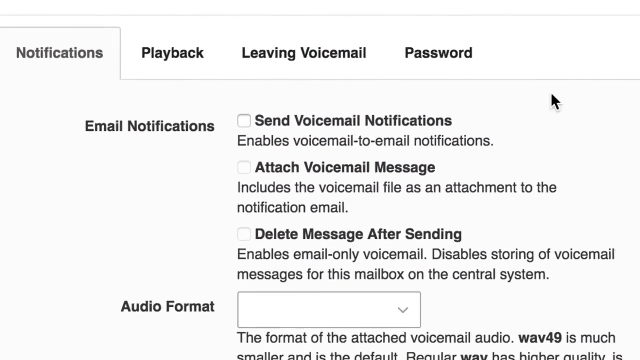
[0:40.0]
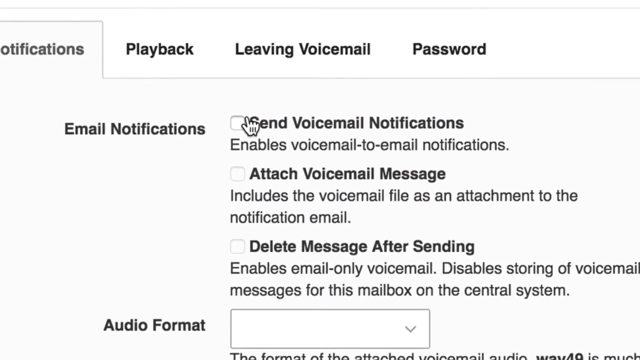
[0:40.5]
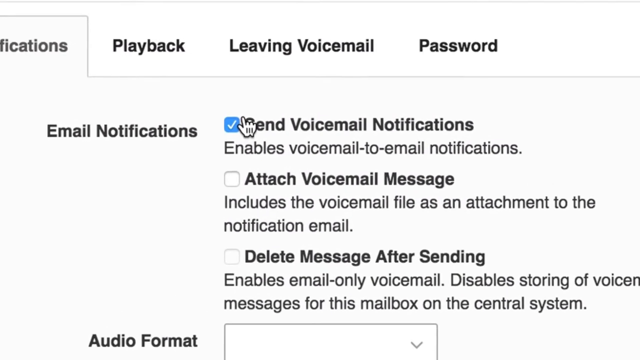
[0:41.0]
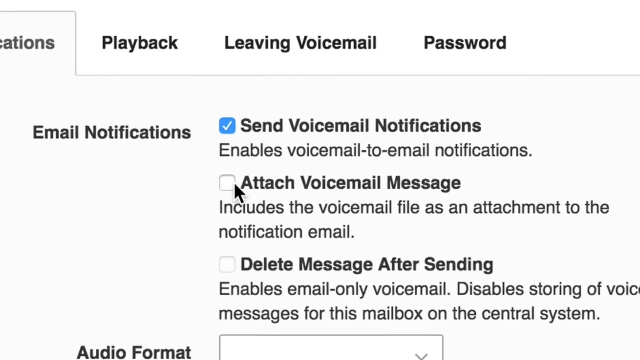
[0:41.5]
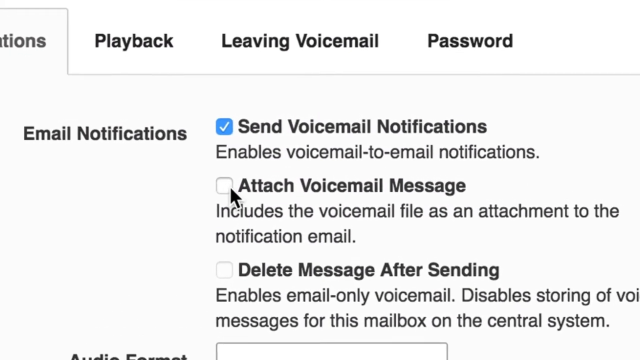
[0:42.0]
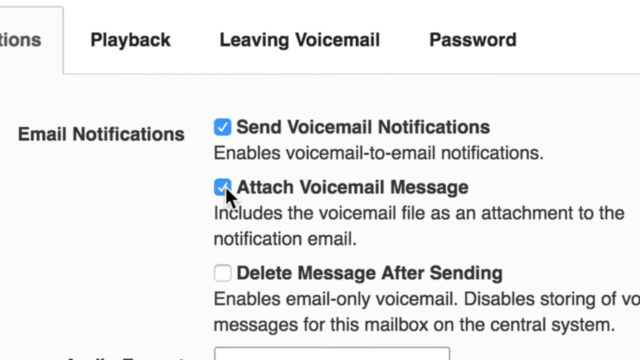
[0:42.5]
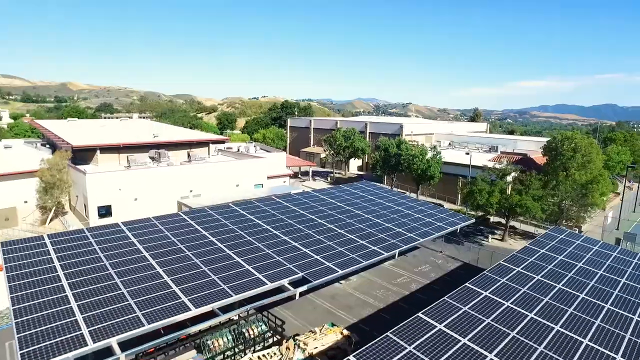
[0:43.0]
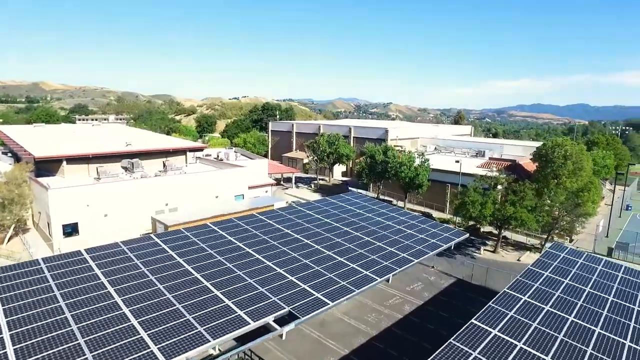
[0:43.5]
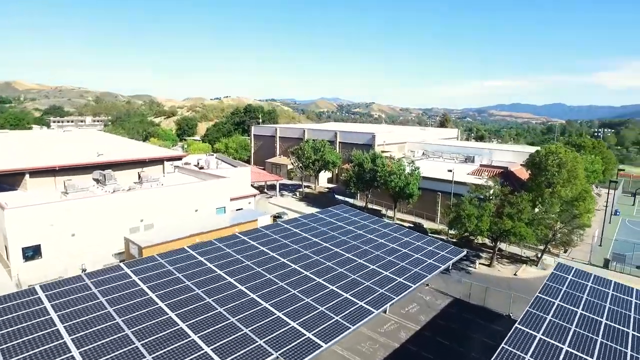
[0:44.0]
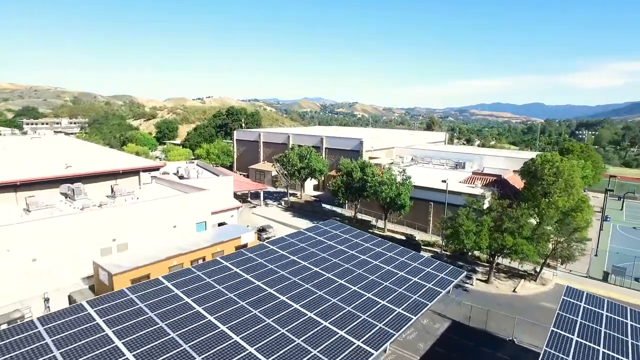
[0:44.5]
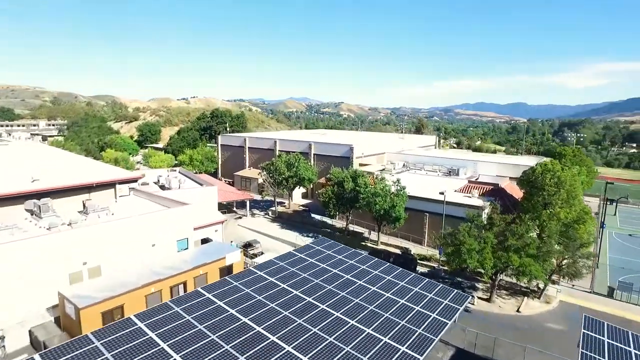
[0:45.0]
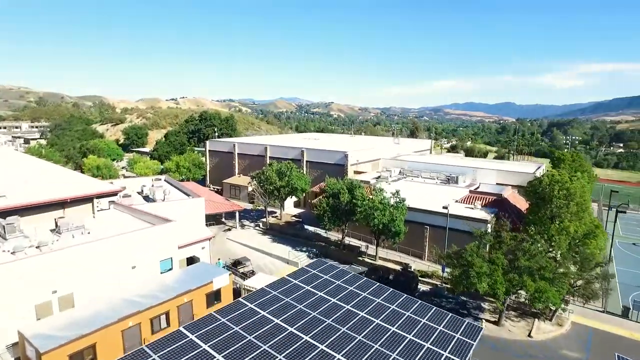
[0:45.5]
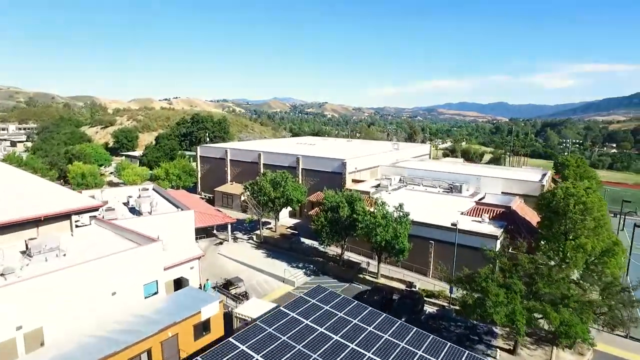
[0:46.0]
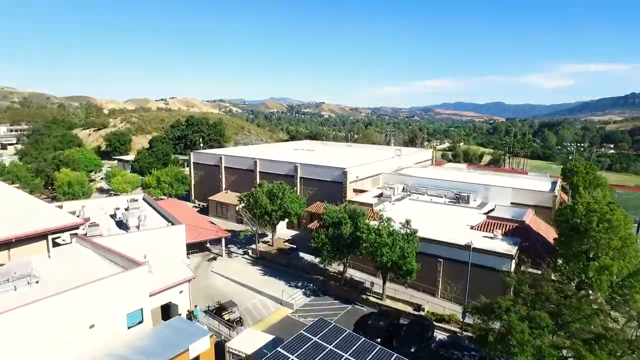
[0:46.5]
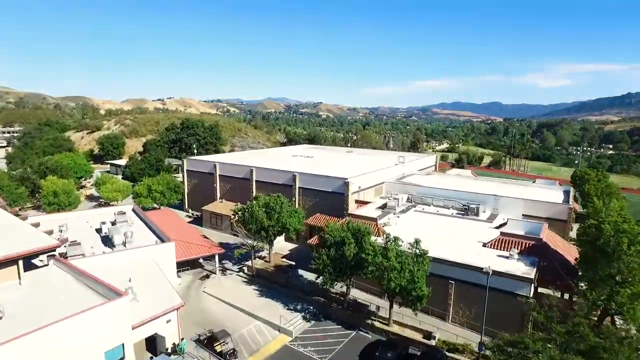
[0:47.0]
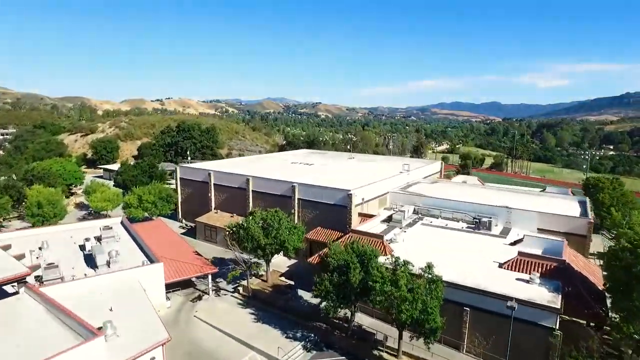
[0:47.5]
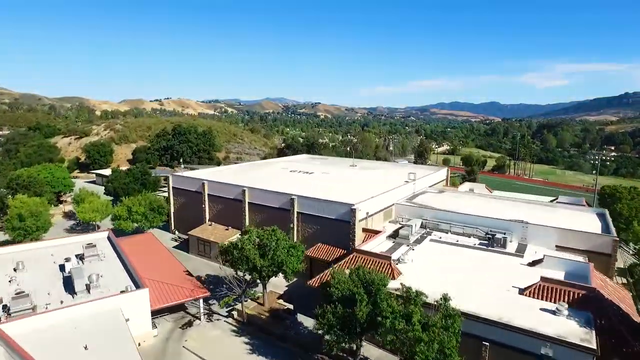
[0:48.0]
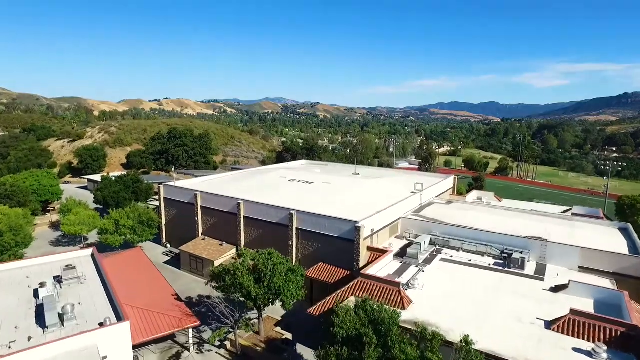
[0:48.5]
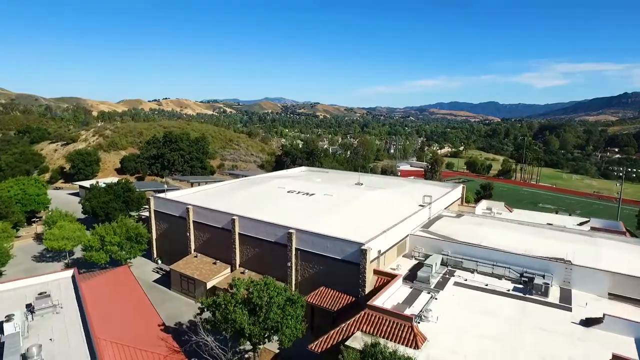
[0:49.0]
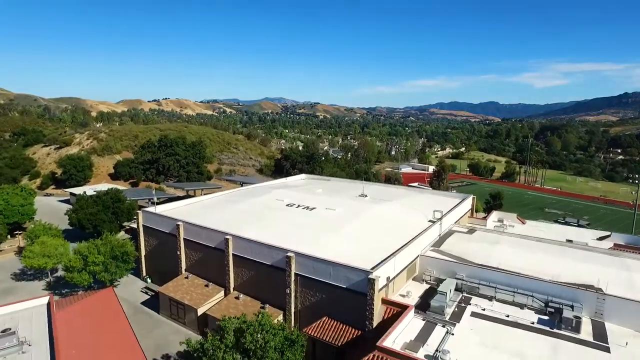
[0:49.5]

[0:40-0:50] What looks like someone on a website tests the email notification settings. One of the tabs at the top says "Notifications", and the mouse ticks the box that says "Send Voicemail Notifications". Other tabs include "Voicemail" and "Password", and the box that says "Attach voicemail message" is ticked, showing a white tick in a blue box. Outside, the view is almost like a drone over the top of a building with a flat roof covered in solar panels. Another building is to the left and another to the right, and what looks like a basketball court is to the right of that further building, partially visible on the right of the screen. In the distance there is blue sky, some low-hanging white cloud, and a number of dry hills all along the horizon, with trees around each building. The view comes over to the further building, and on the other side of it is what looks like a football field, a gridiron field with an athletics track around it.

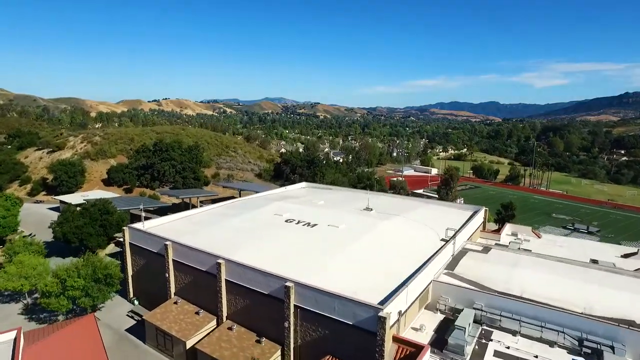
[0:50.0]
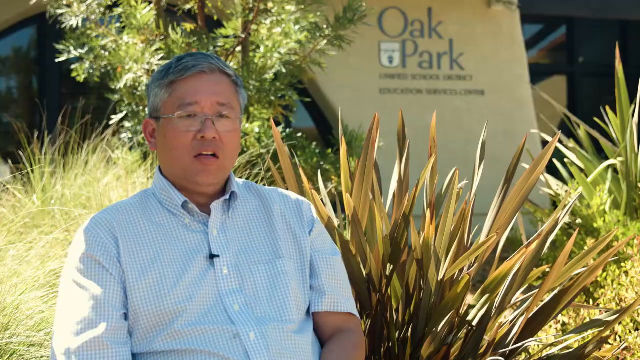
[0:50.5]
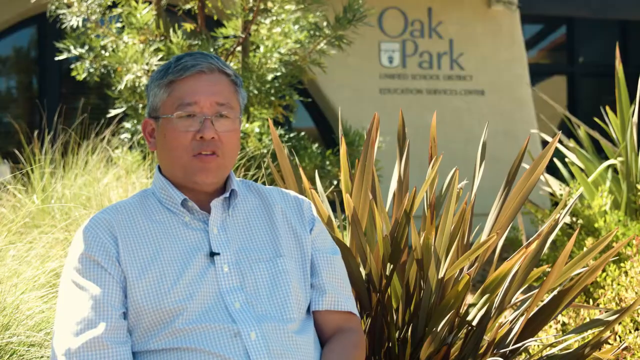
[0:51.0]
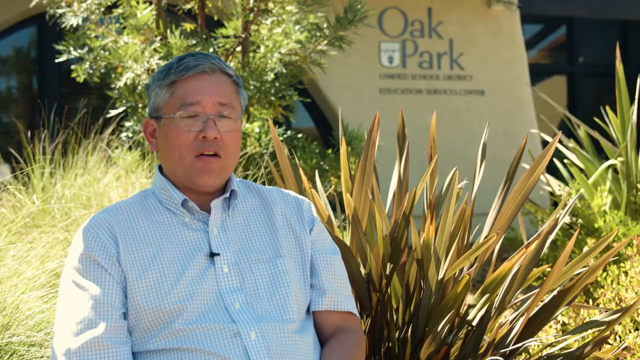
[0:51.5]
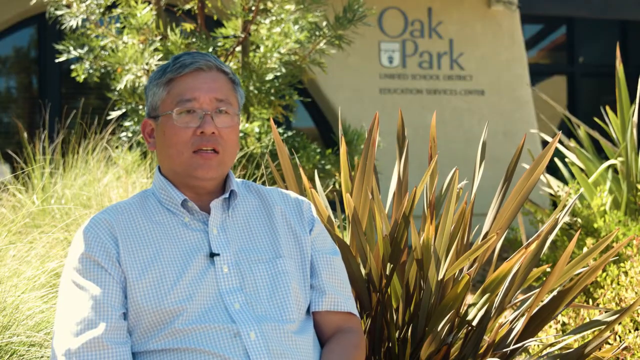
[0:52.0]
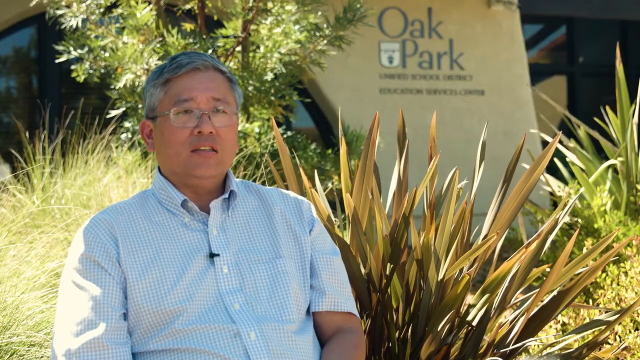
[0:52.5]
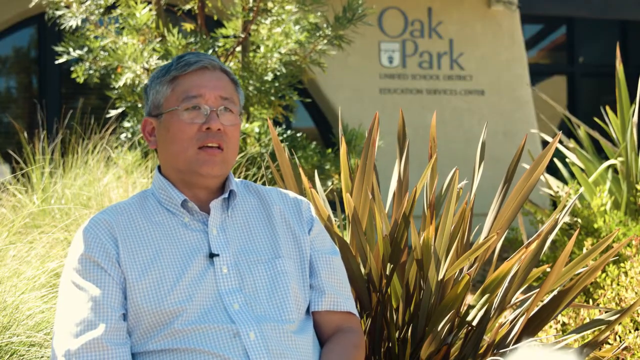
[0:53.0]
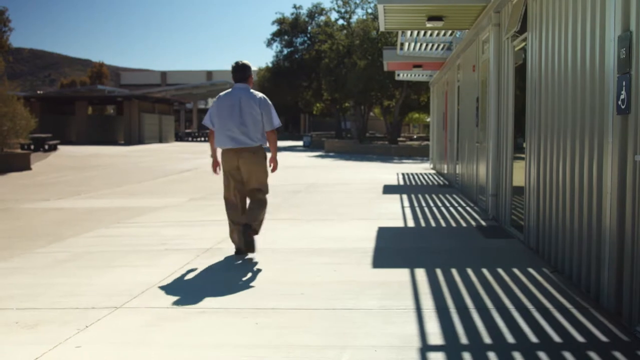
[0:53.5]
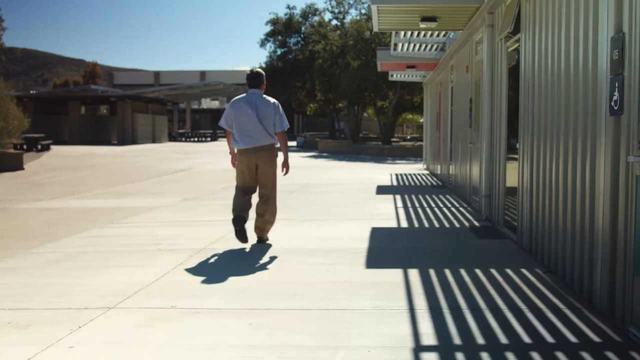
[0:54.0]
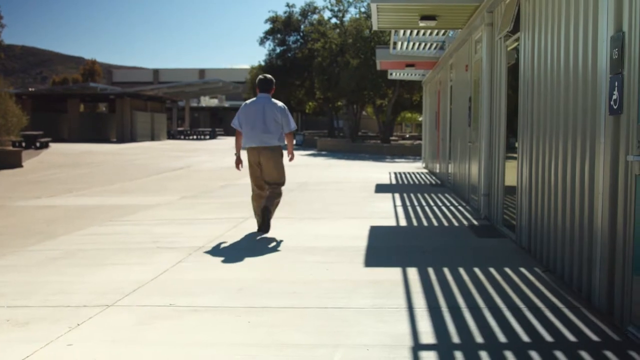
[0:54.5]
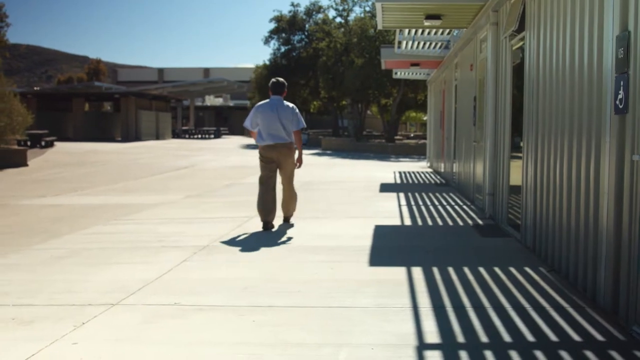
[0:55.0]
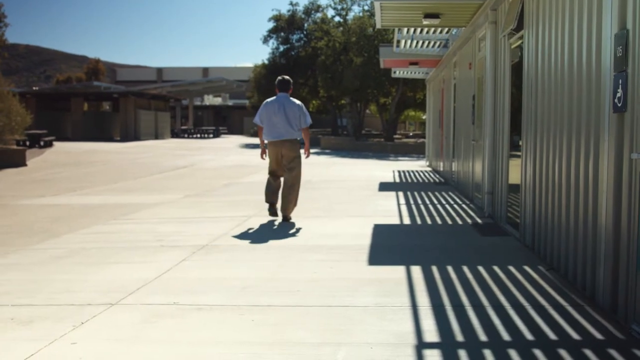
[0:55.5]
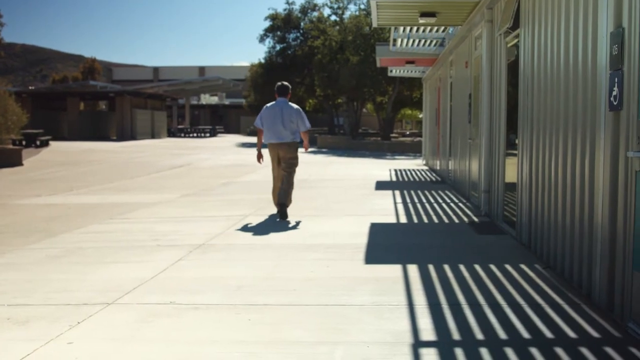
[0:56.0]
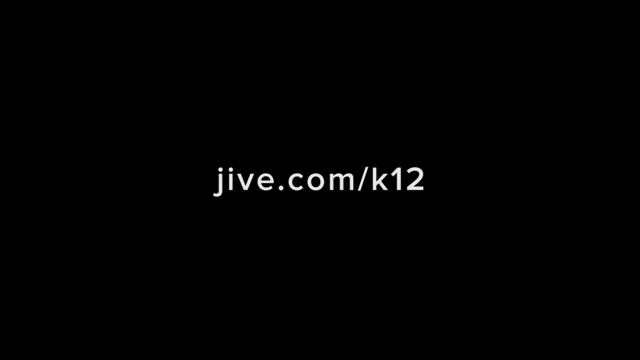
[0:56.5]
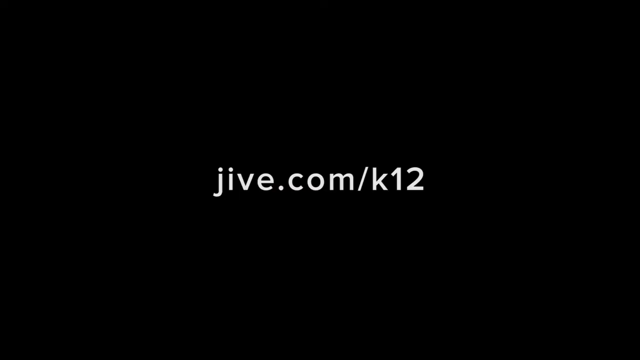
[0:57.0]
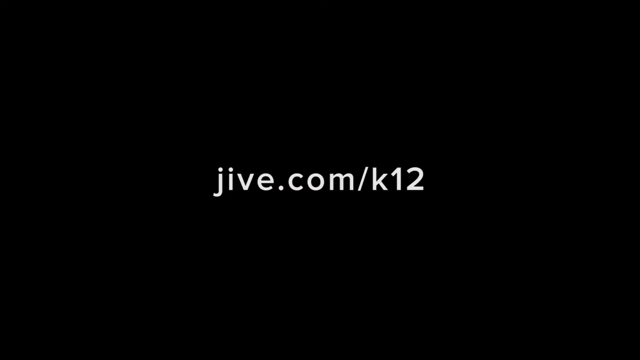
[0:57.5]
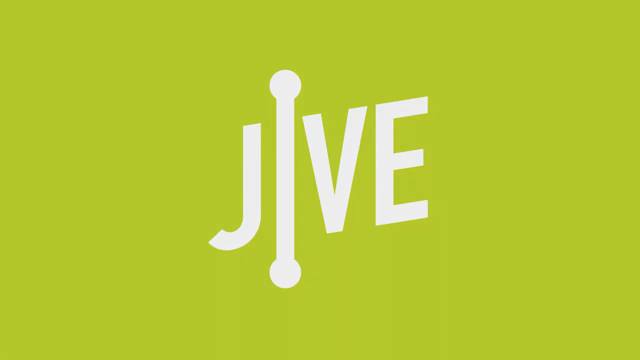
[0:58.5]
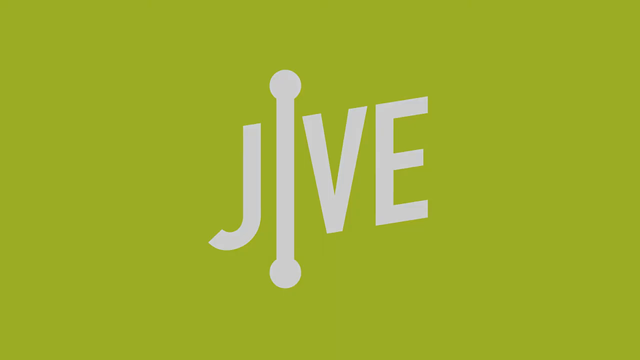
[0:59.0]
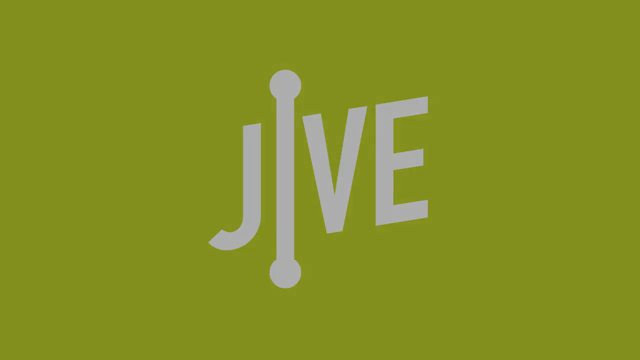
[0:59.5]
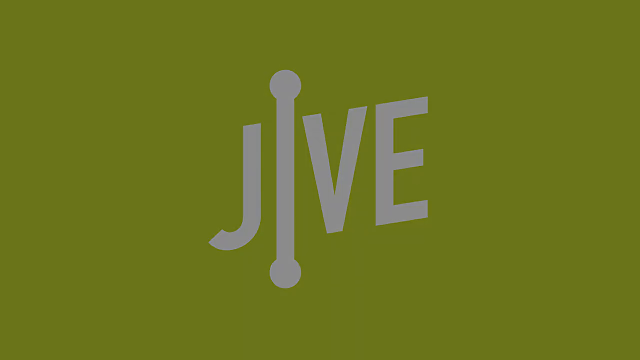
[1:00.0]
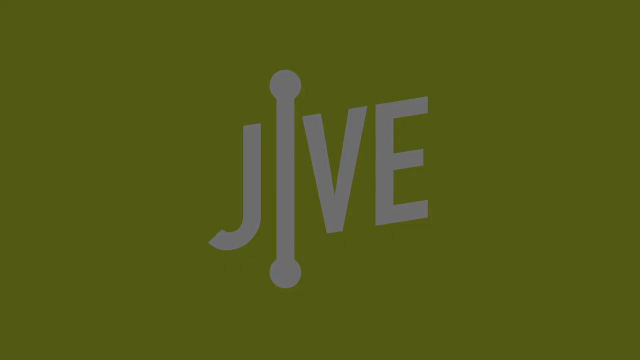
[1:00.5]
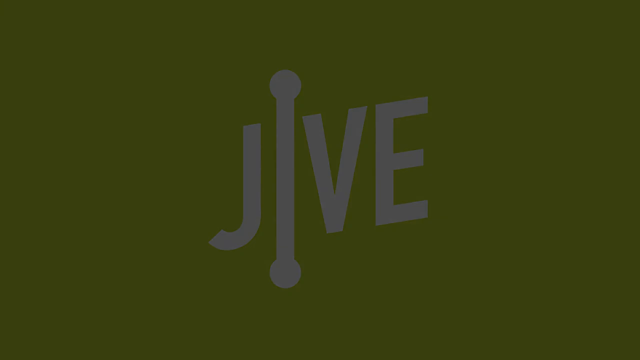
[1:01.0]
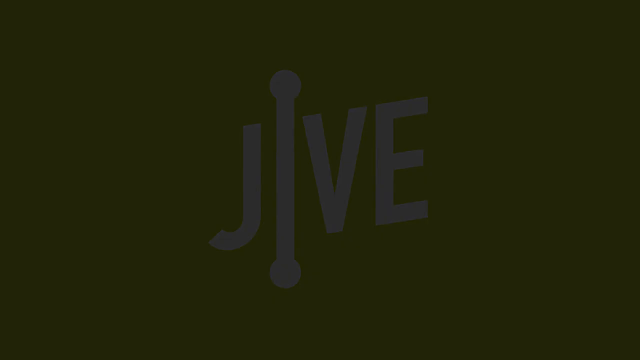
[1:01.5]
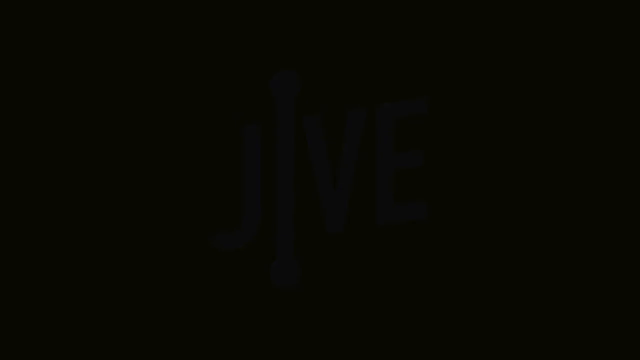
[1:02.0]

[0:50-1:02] A drone flies over a building on a sunny day, with quite dry hills in the background but a lot of green trees as well. The building is quite large, with a white roof that says "gym" on it. Behind the gym is an American football field with a sort of reddish athletics track going around it. The drone keeps flying, and then the video switches back to a man being interviewed. He is sitting down, wearing sort of a light blue checked shirt with short sleeves, and has sort of short greyish blackish hair and glasses. He talks and looks slightly concerned. In a separate shot the same man walks in the distance, with some tables and chairs on the left and a disabled toilet sign on the right; he appears to be somewhere in a high school. Then "jive.com" appears in white text on a black background, followed by the word "Jive" in white text on a green background.